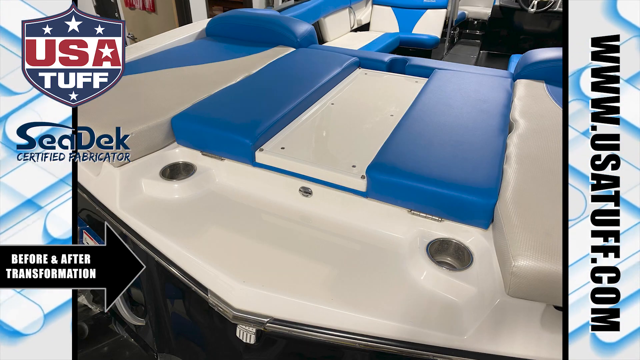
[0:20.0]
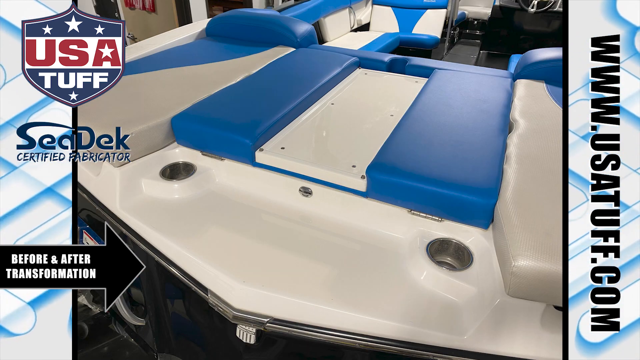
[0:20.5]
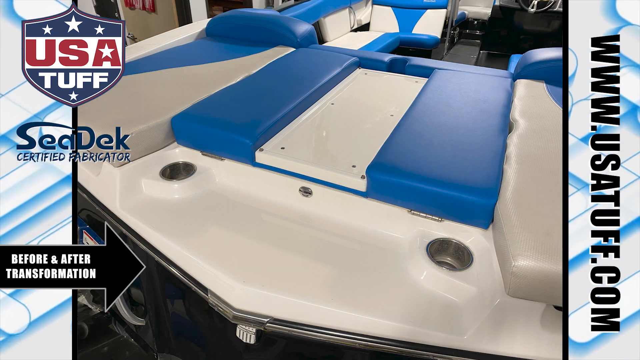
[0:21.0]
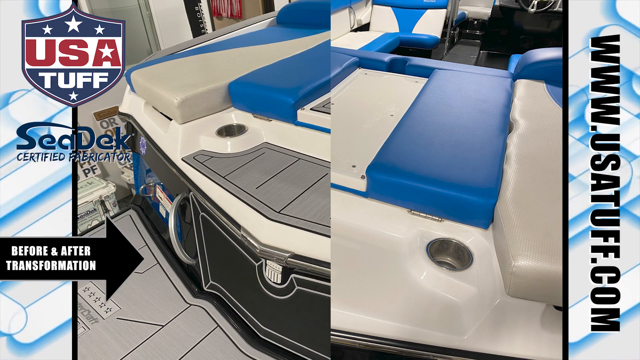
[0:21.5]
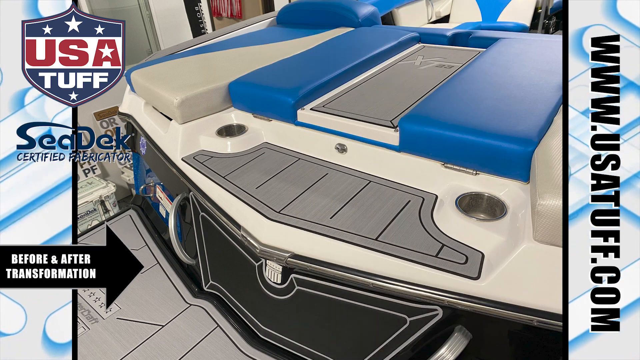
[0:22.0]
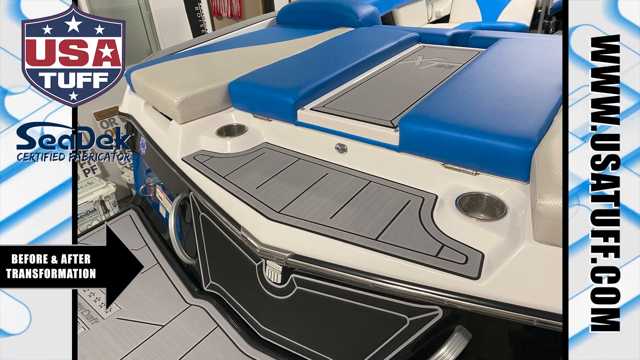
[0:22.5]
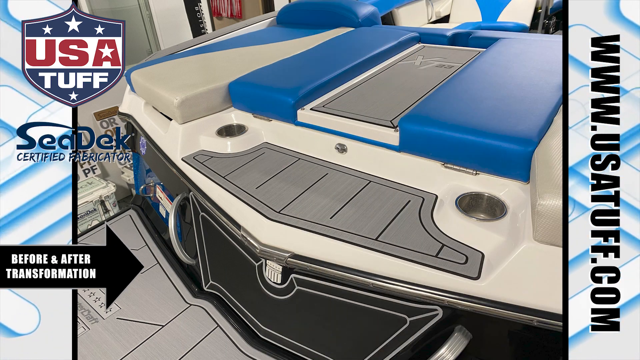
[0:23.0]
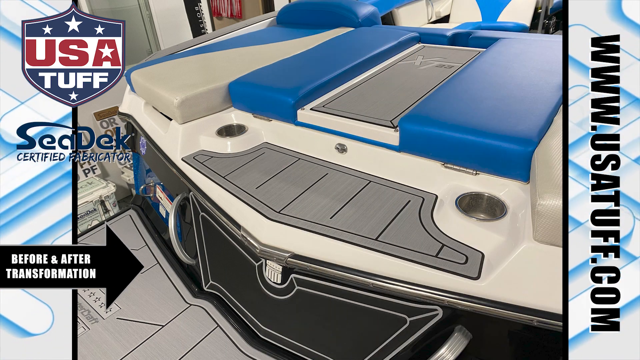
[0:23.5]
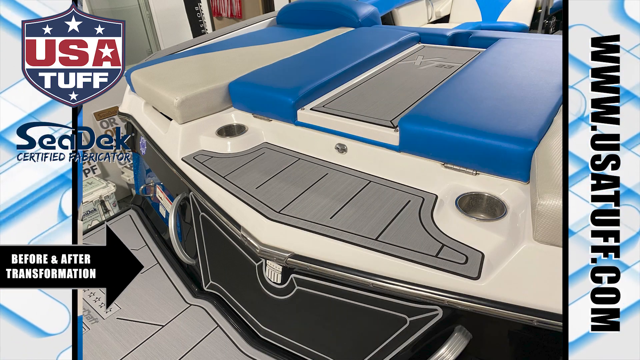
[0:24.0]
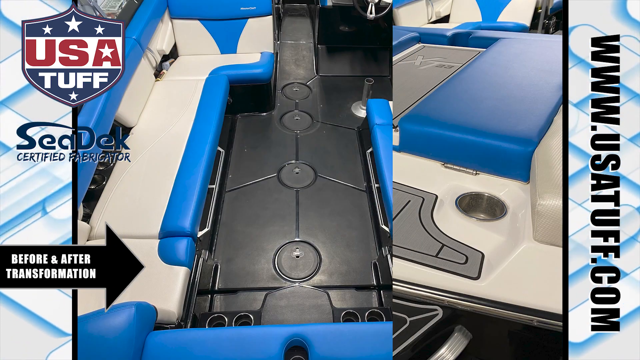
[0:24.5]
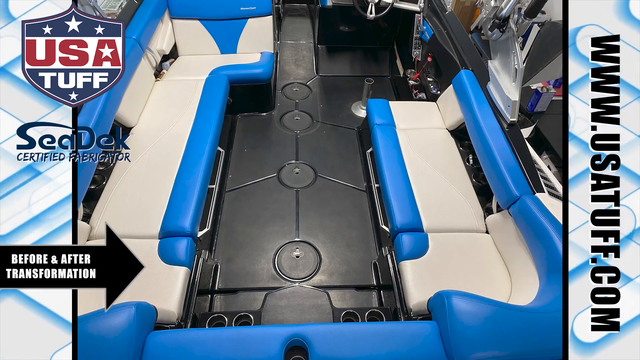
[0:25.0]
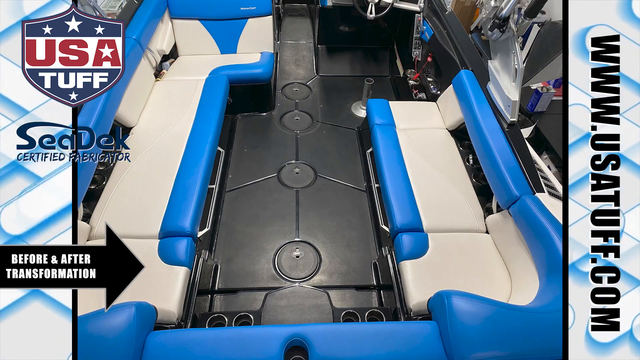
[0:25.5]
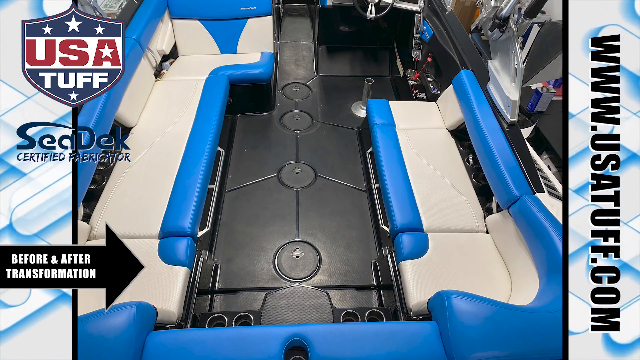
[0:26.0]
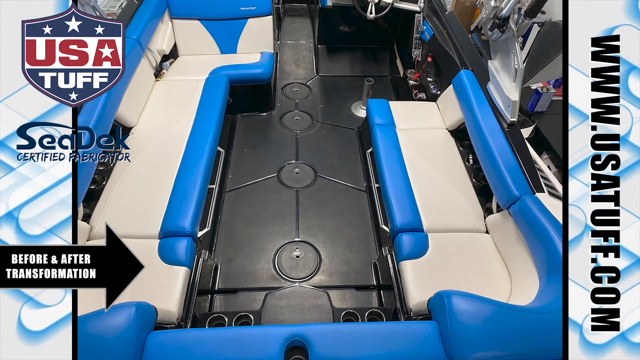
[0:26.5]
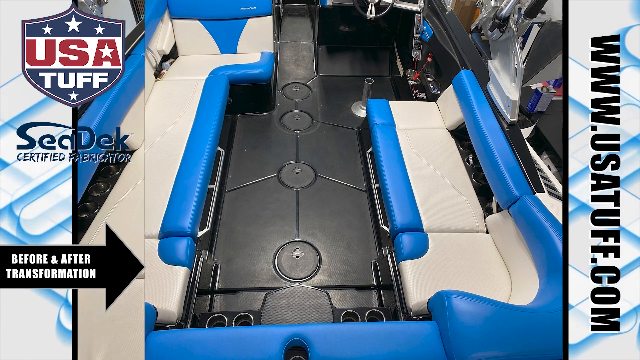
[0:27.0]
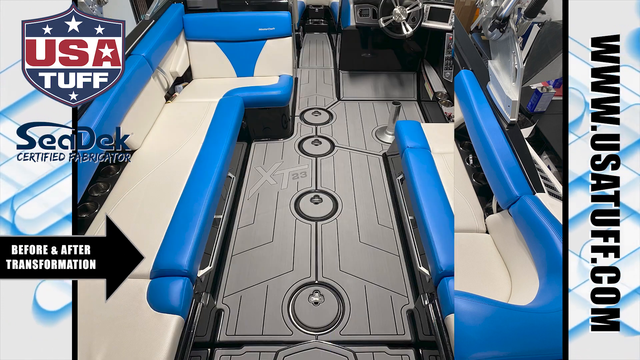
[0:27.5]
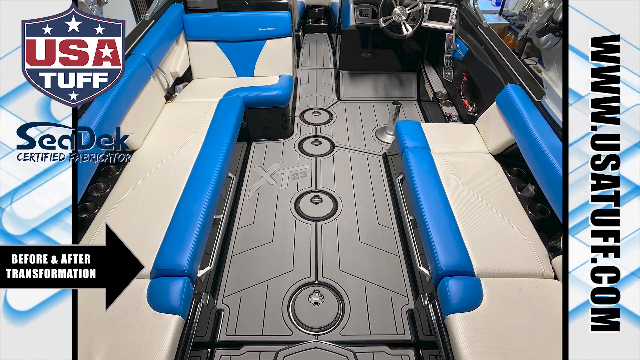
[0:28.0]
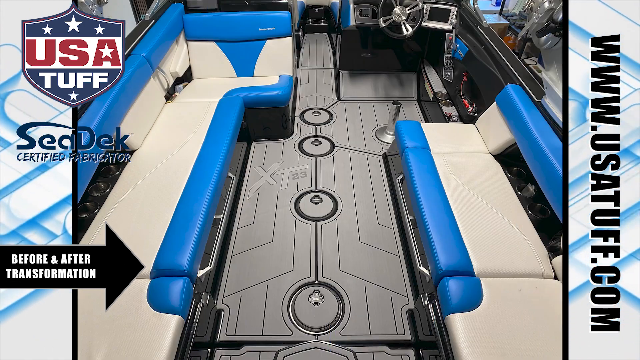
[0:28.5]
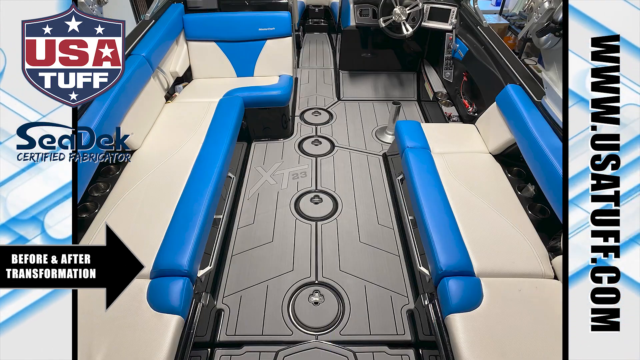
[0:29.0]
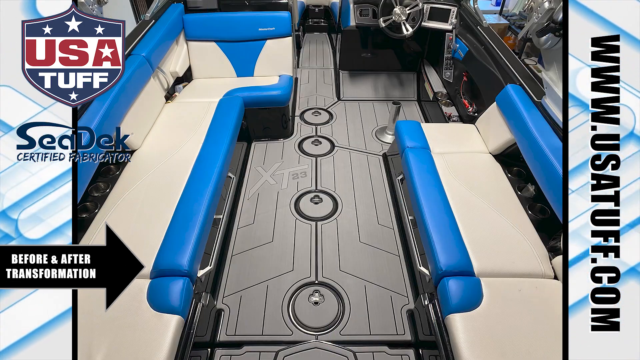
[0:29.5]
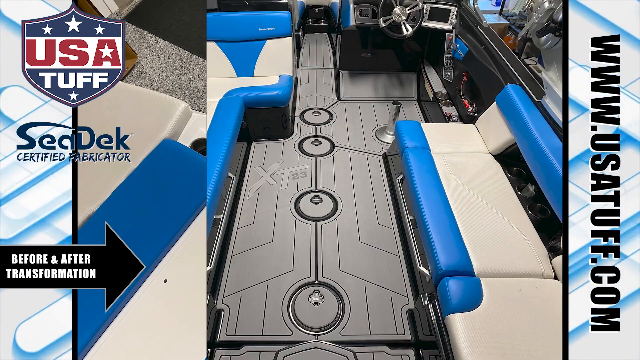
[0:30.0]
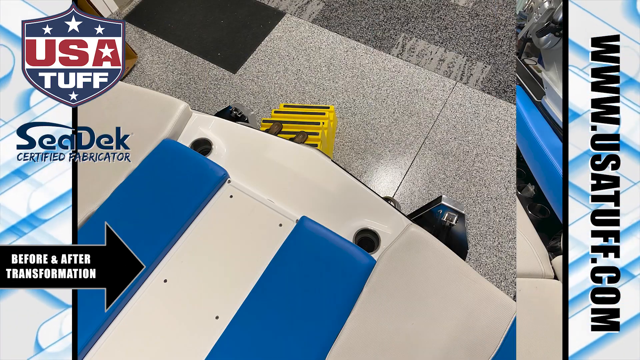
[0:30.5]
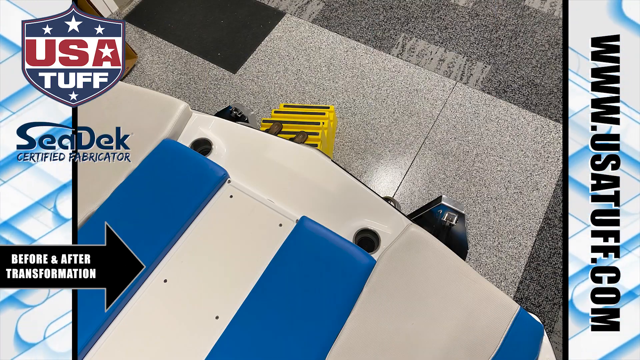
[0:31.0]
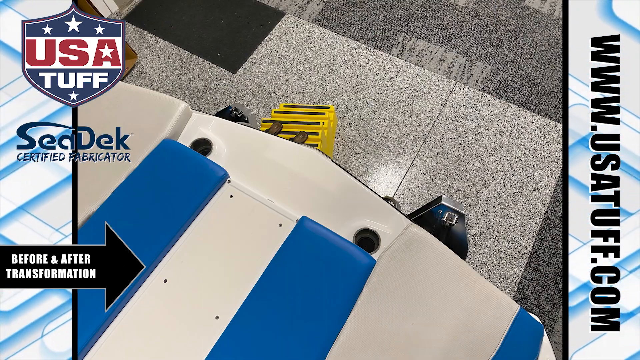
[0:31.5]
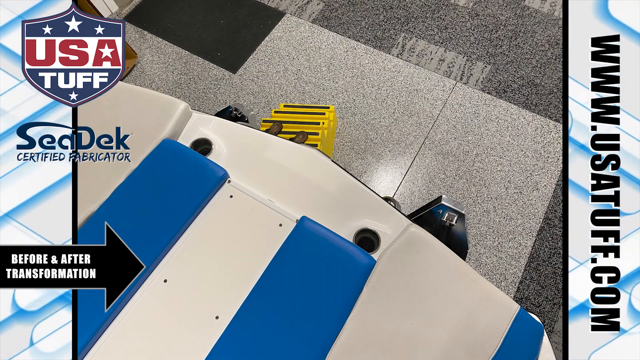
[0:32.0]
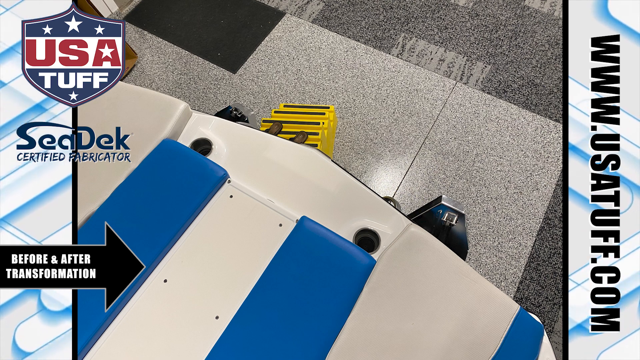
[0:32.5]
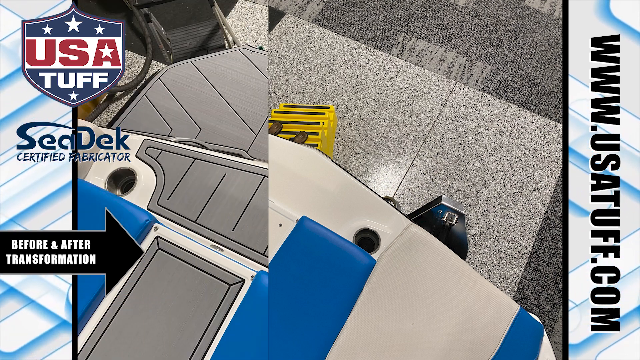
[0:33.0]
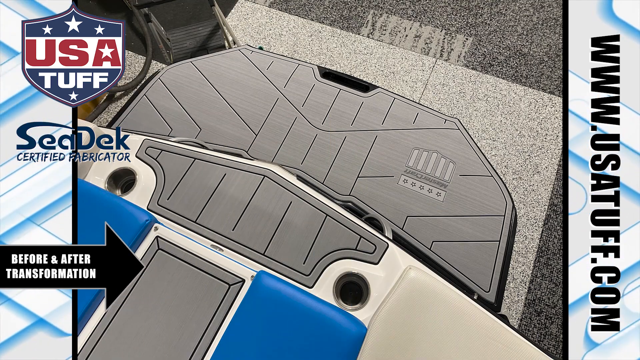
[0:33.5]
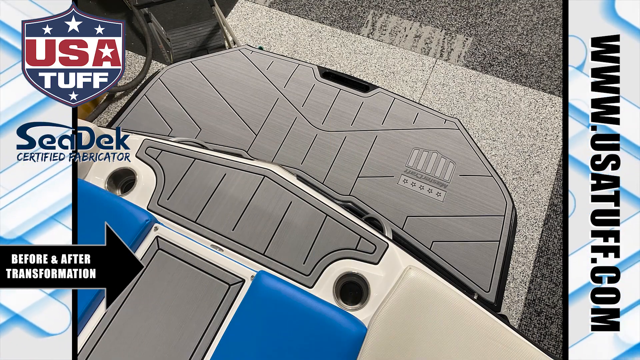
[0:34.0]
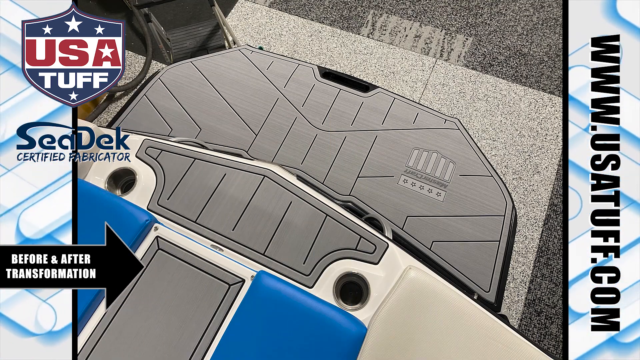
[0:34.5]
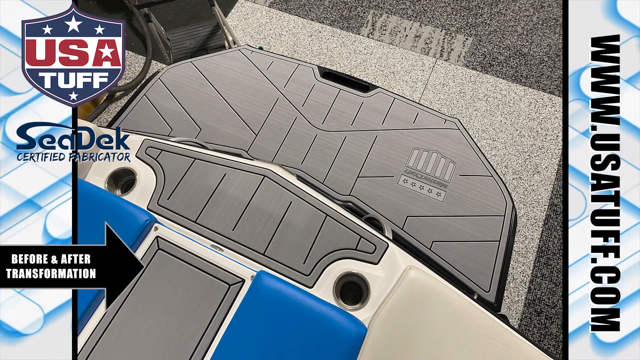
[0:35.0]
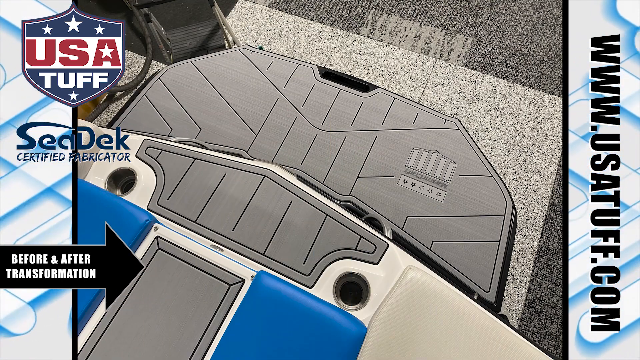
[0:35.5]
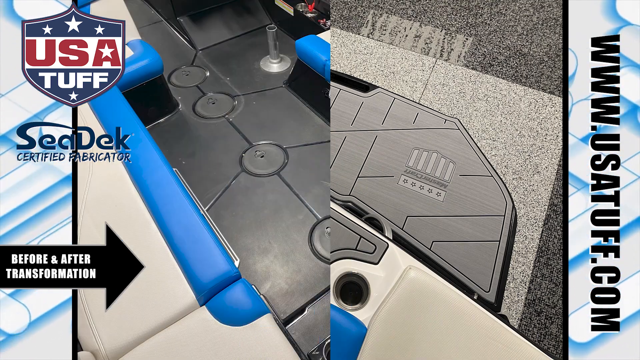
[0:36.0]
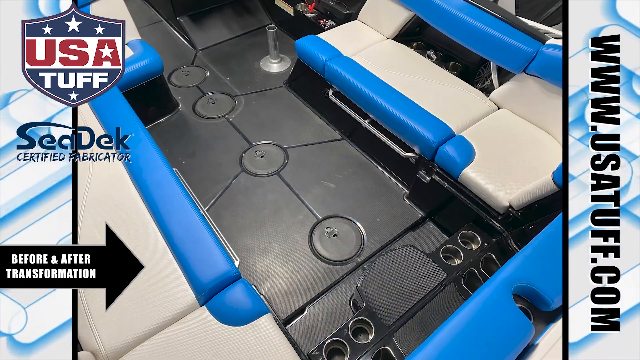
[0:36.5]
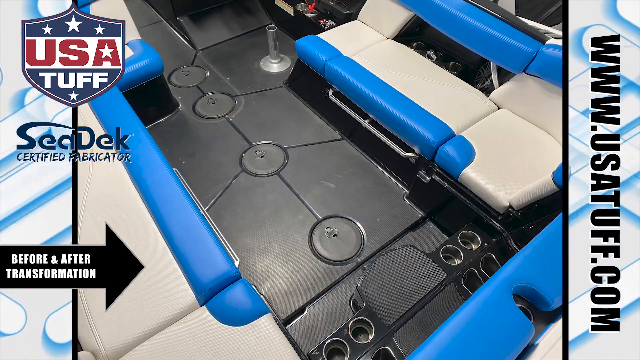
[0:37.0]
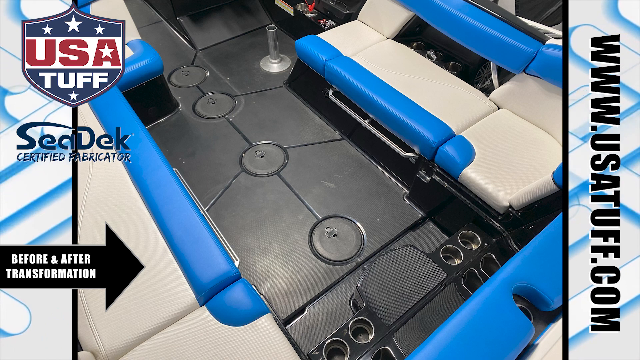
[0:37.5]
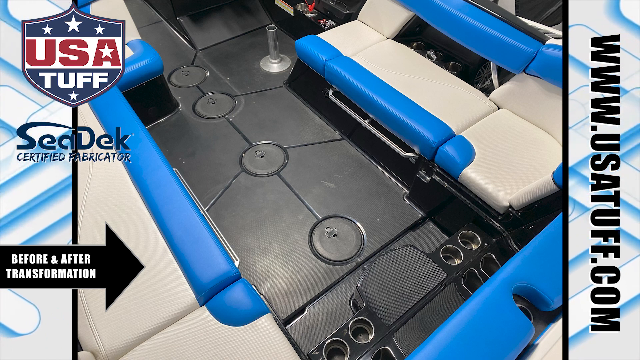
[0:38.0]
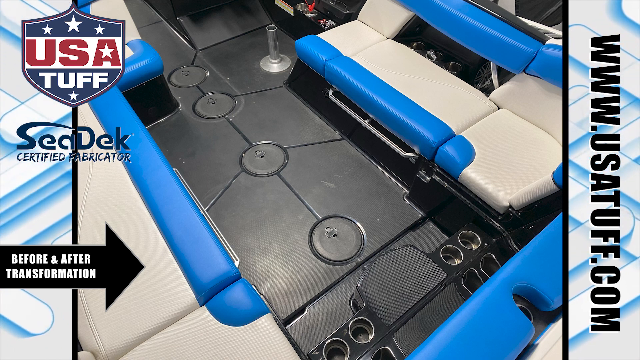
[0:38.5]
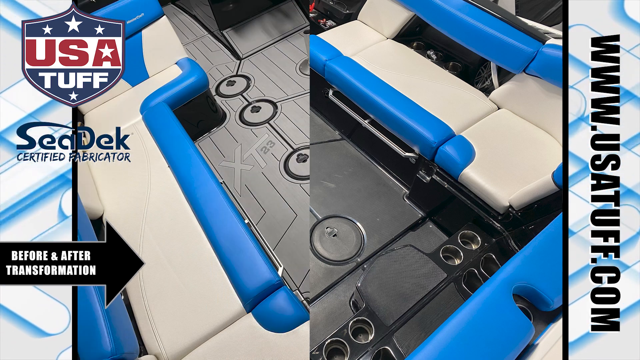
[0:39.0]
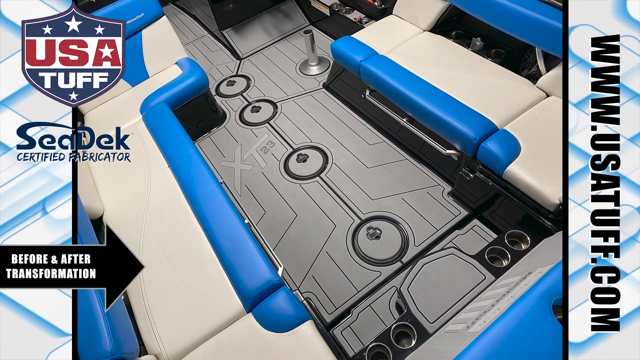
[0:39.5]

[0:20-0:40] On the right side, in black with a white outline, is "www.usatuff.com". In the top left-hand corner is a shield-like emblem with three white stars at the top and one white star at the bottom; "USA" is written in red with a star inside the A, and "TUFF" is in white. Underneath it reads "CDEK certified fabricator". The text "before and after transformation" appears in a white font on a black arrow. The video returns to the boat, whose back part is blue and white. The arrow moves up, pointing to that part, and the difference becomes visible: the background went from white to something like black, with mats added that look like water-protected mats.